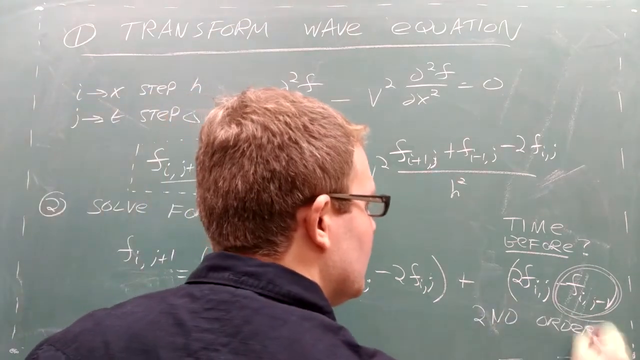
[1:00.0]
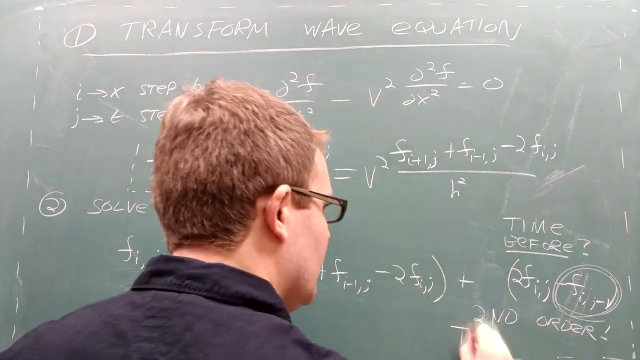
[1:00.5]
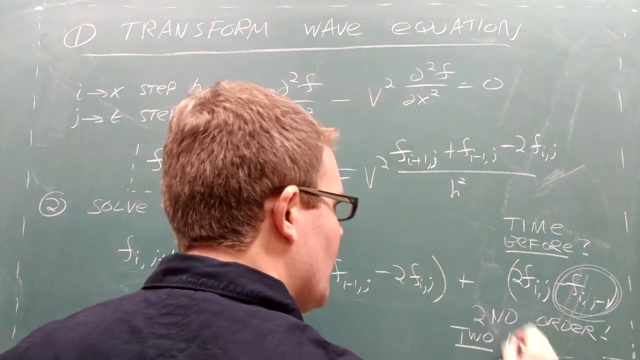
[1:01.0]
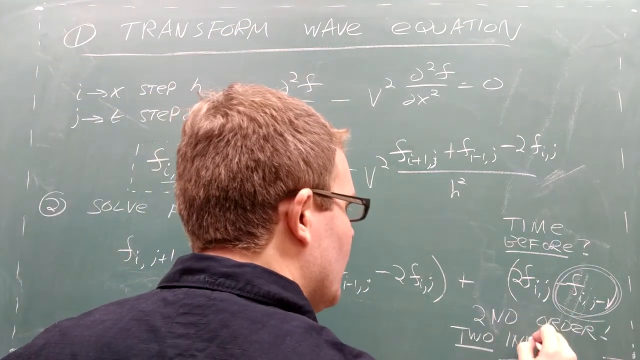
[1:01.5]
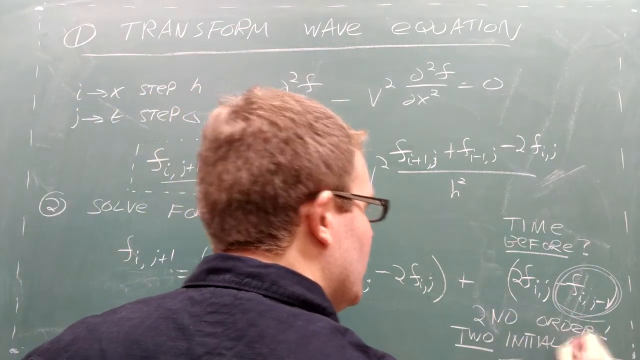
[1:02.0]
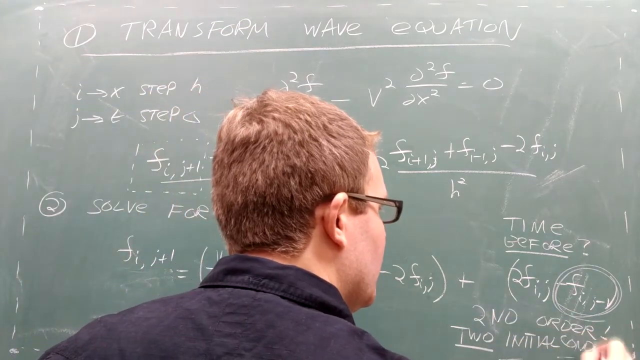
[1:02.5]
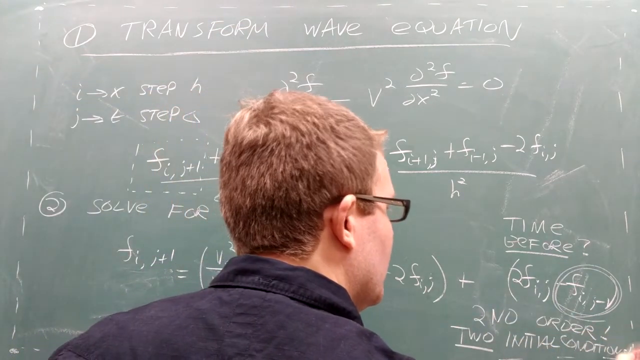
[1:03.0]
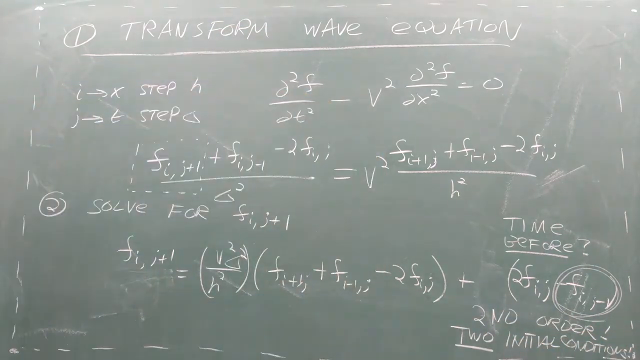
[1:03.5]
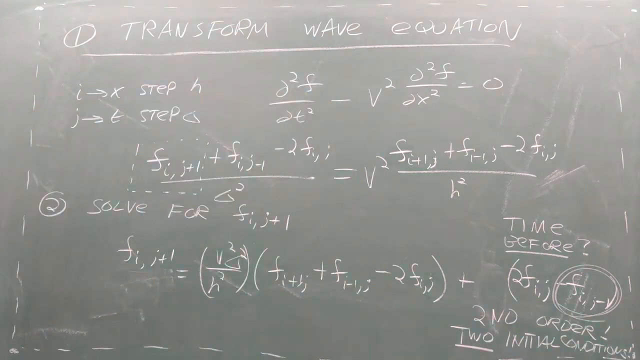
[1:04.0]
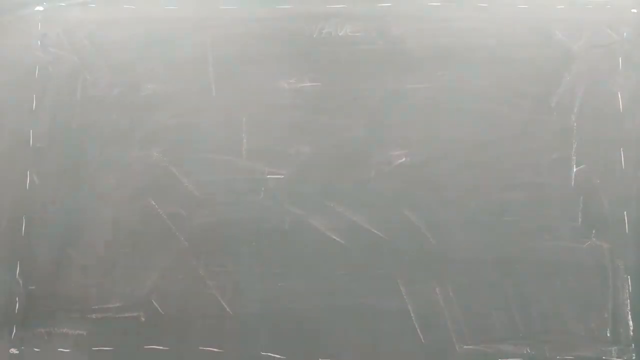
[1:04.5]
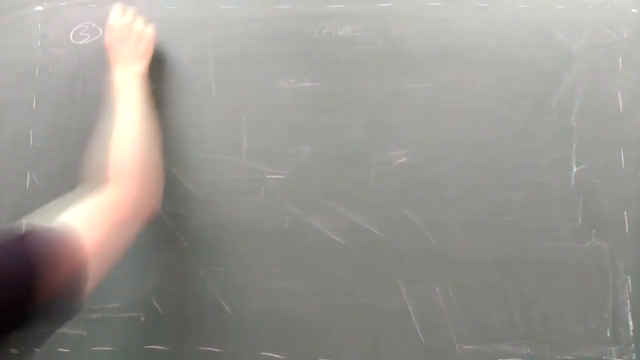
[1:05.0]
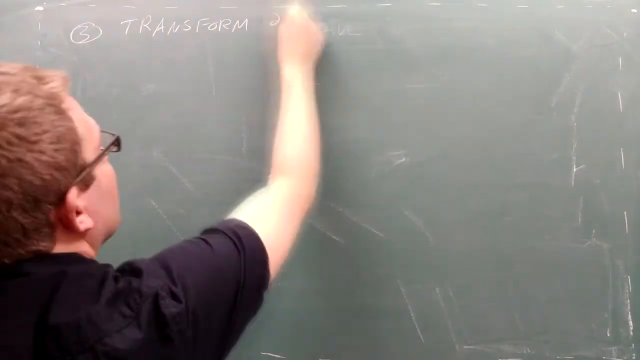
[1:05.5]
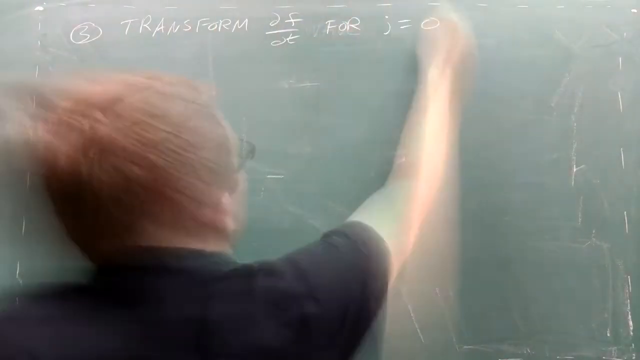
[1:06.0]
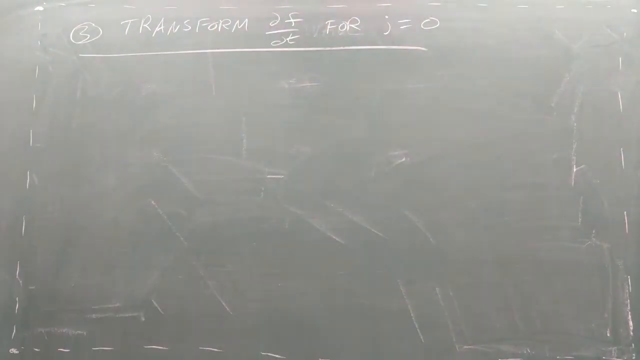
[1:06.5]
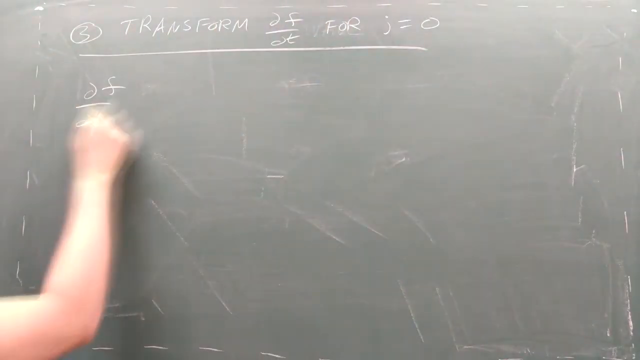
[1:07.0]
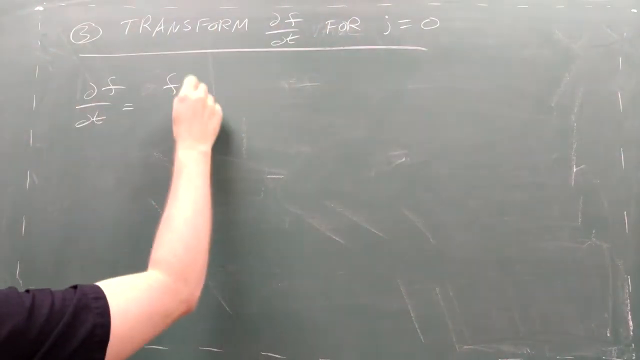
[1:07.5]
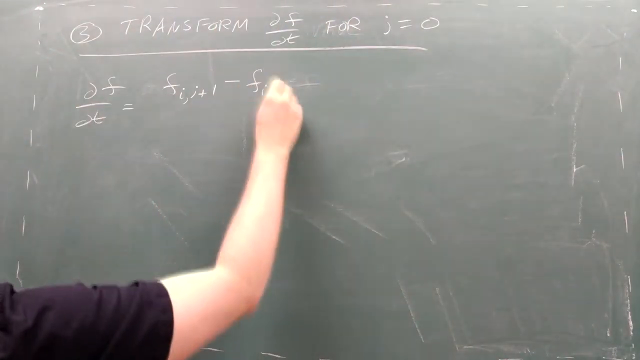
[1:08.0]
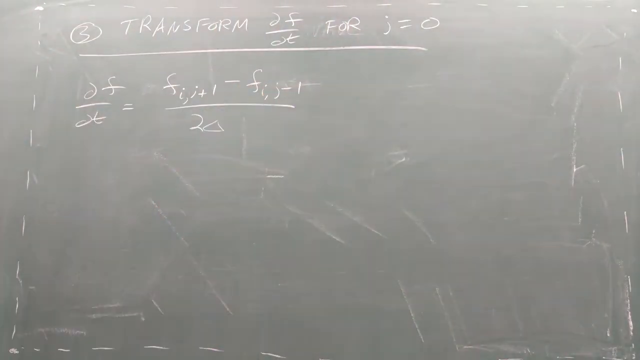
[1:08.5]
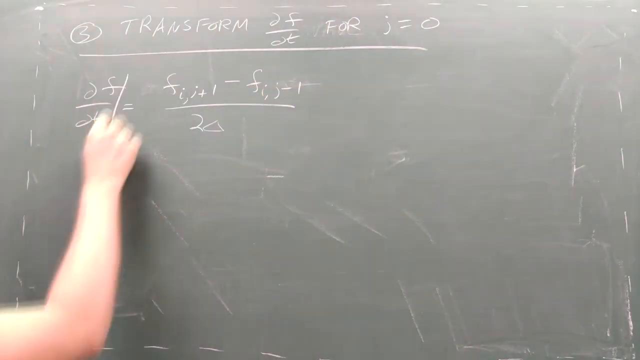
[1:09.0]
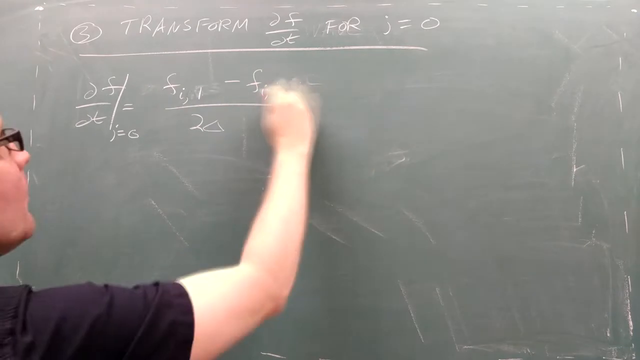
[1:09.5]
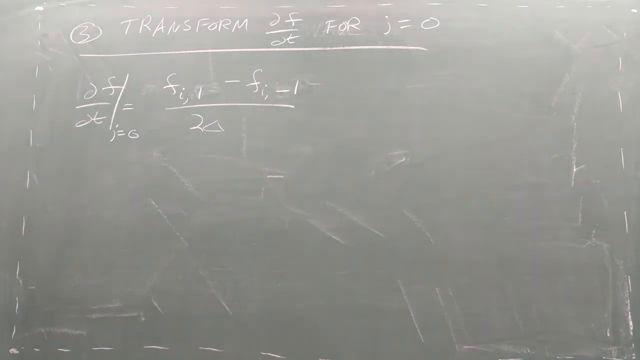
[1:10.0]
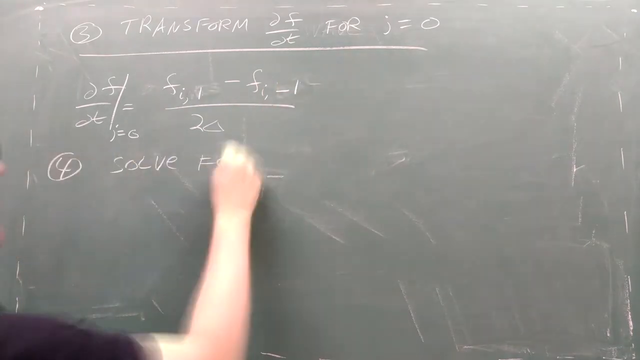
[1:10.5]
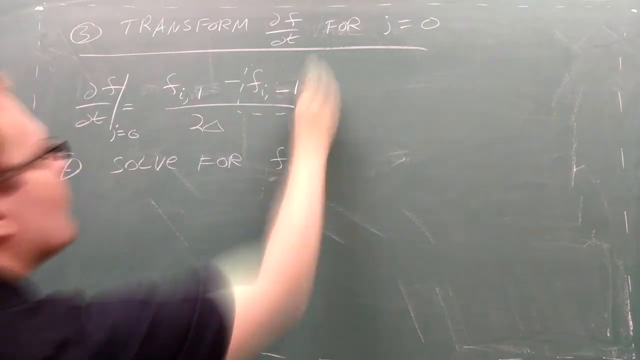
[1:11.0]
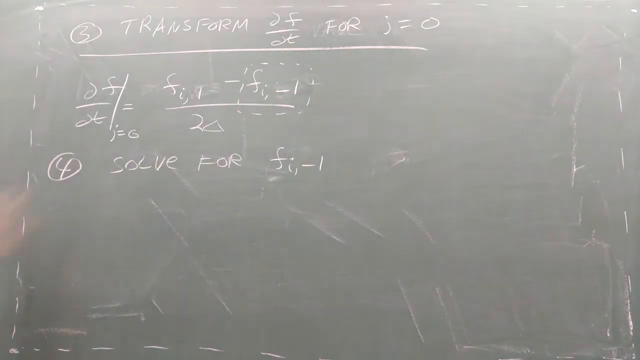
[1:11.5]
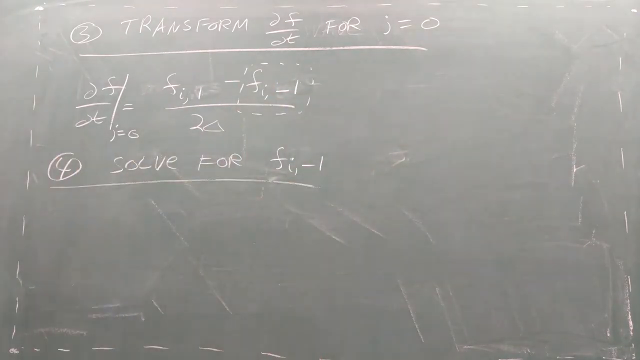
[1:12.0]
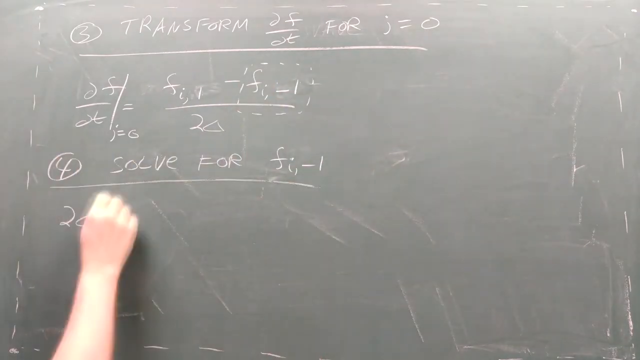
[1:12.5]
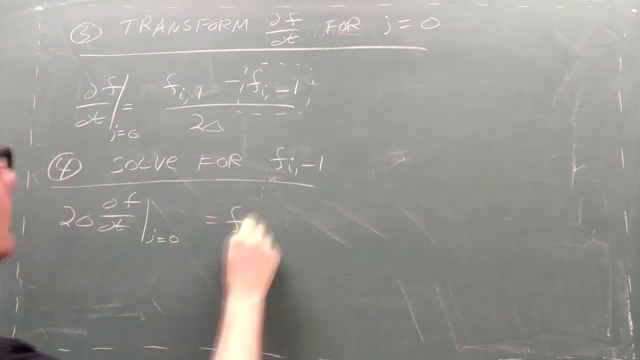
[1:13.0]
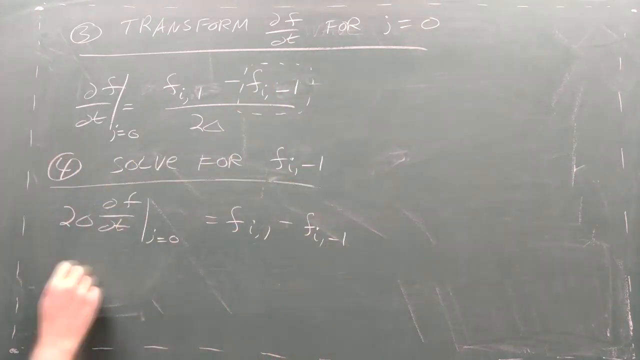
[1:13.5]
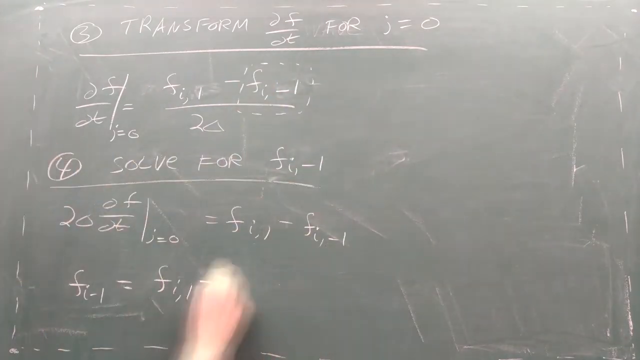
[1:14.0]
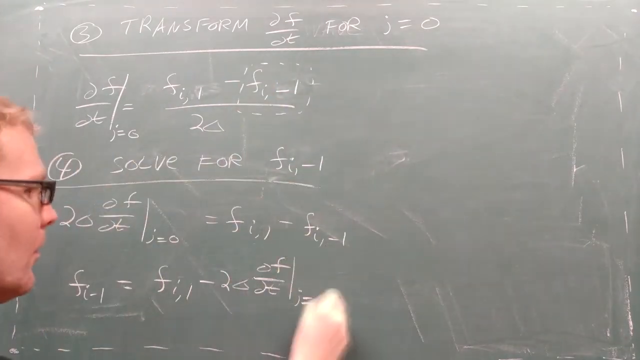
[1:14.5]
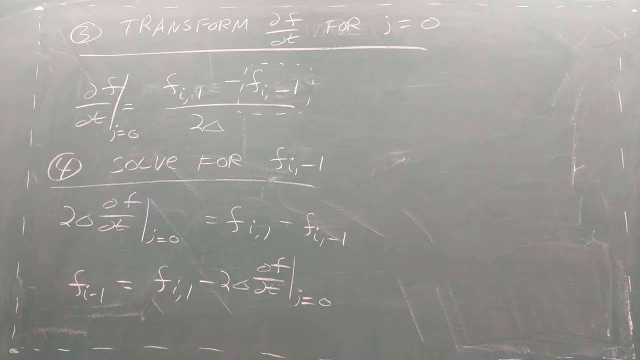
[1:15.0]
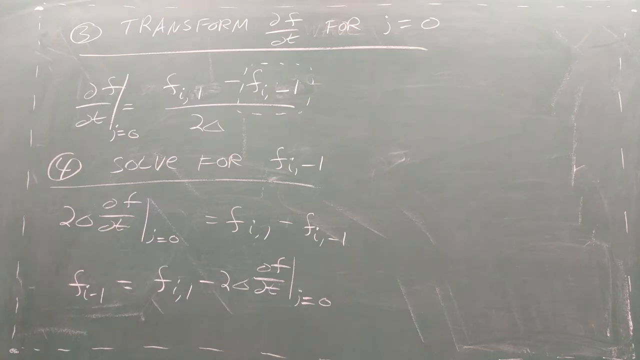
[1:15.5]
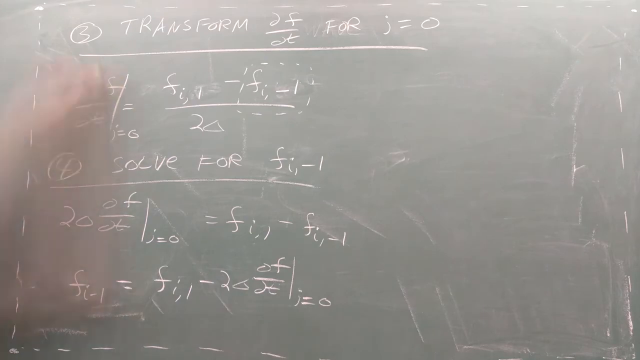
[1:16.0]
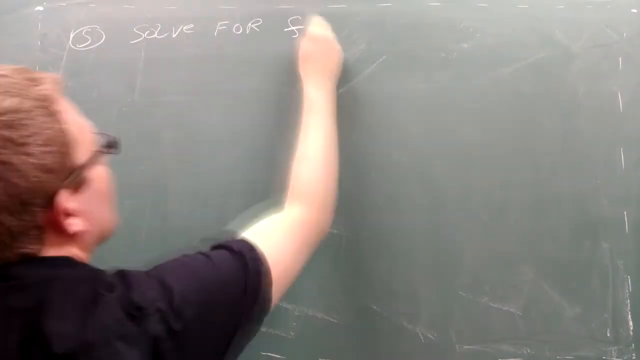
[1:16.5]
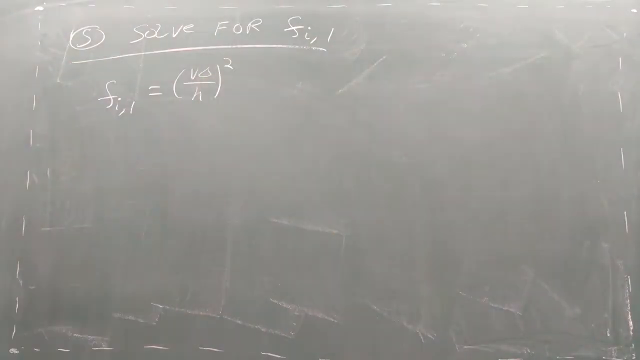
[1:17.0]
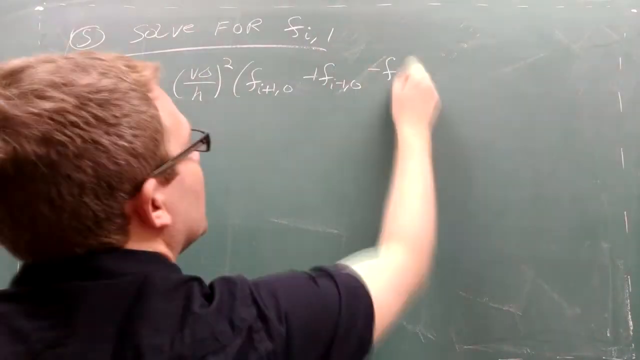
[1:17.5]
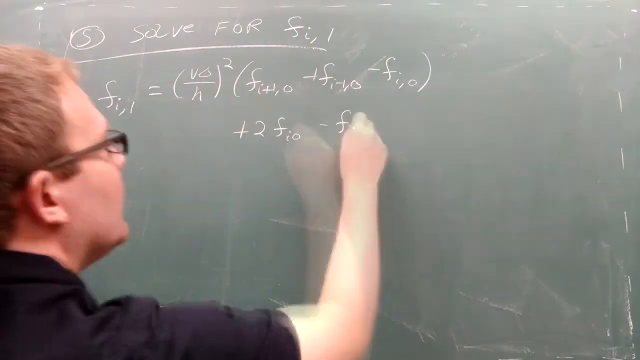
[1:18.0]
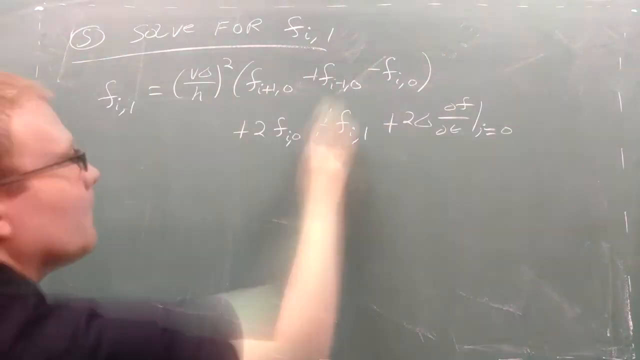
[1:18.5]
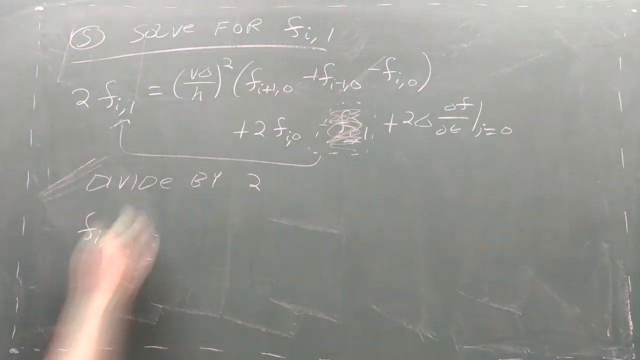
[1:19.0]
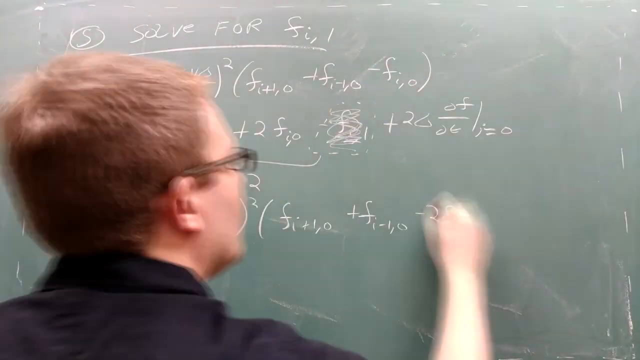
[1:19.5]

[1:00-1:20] He shows how to transform 2f for j equals zero, working through the steps very fast and dividing by two. He moves on to step three and then step four, solving for f1 negative one; step five is apparently divide.